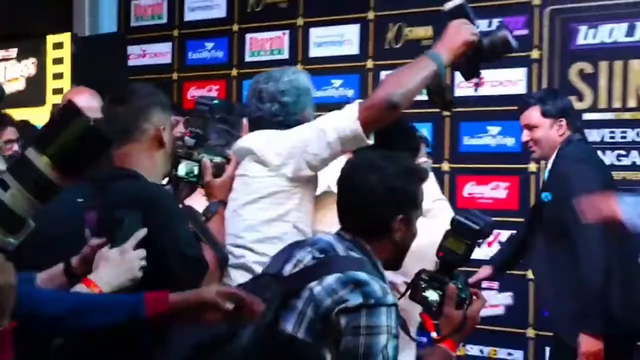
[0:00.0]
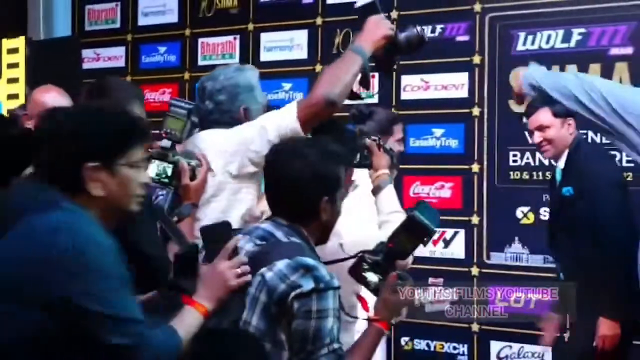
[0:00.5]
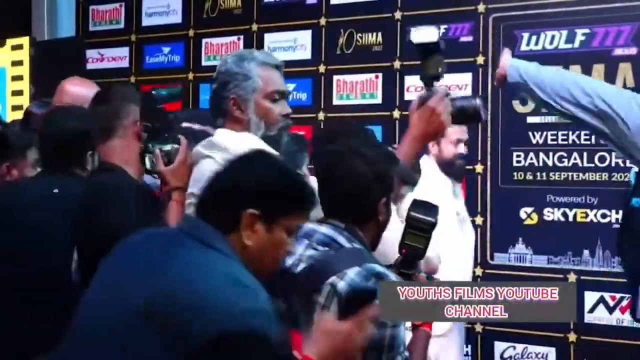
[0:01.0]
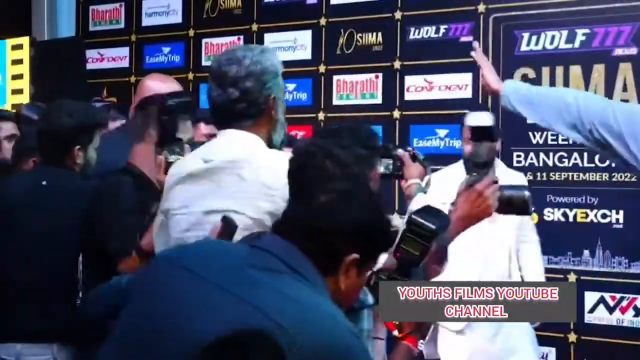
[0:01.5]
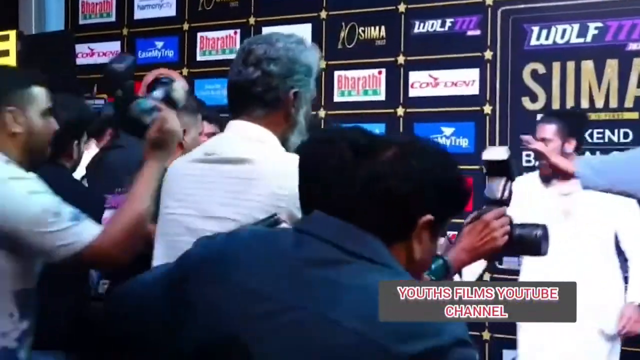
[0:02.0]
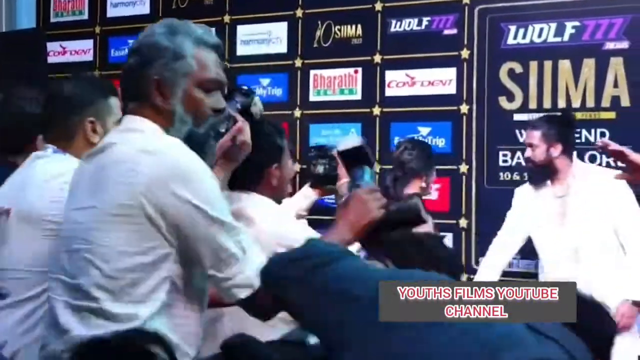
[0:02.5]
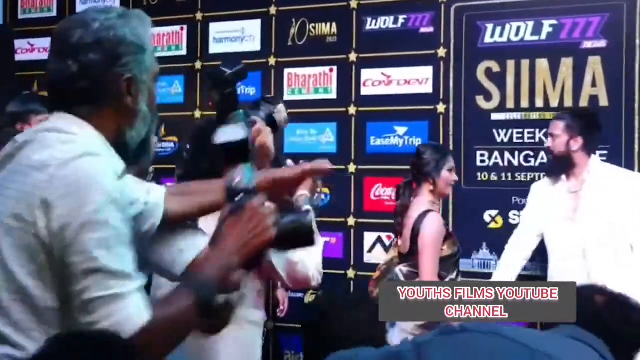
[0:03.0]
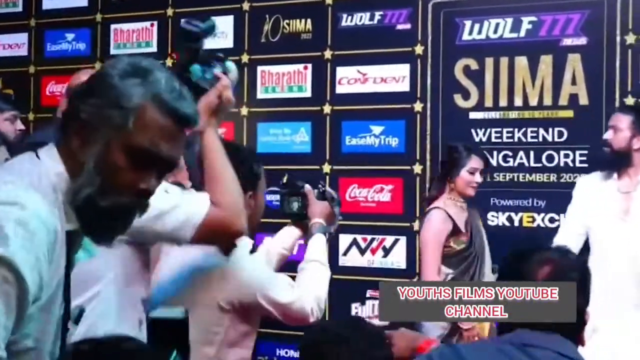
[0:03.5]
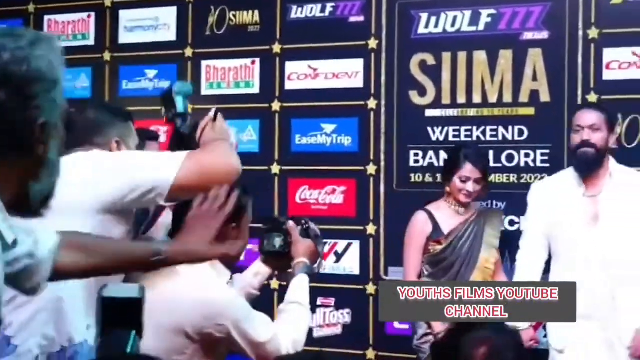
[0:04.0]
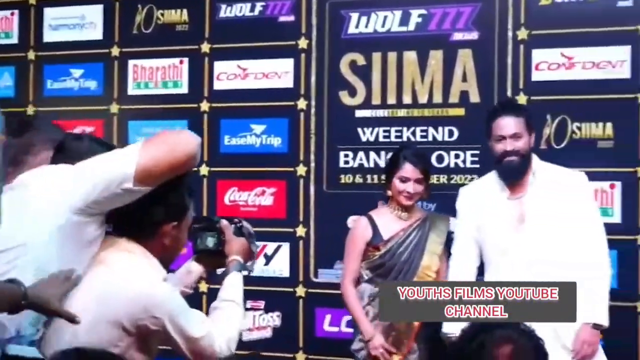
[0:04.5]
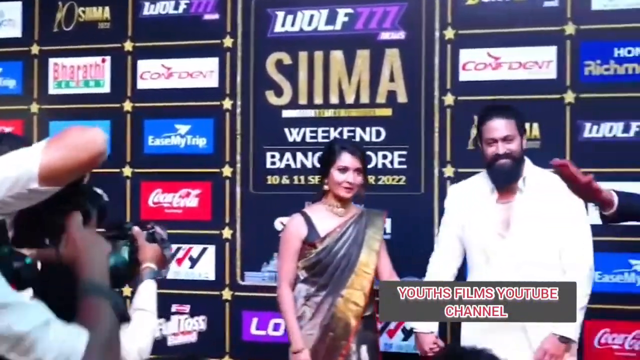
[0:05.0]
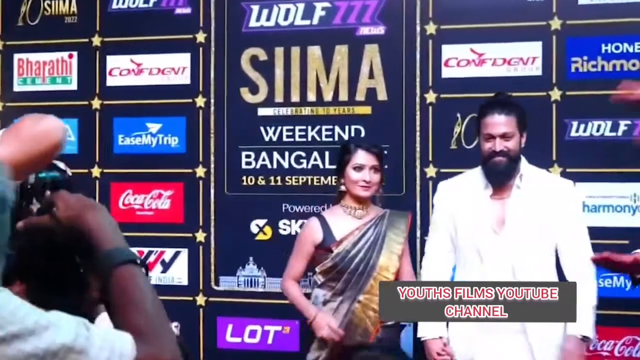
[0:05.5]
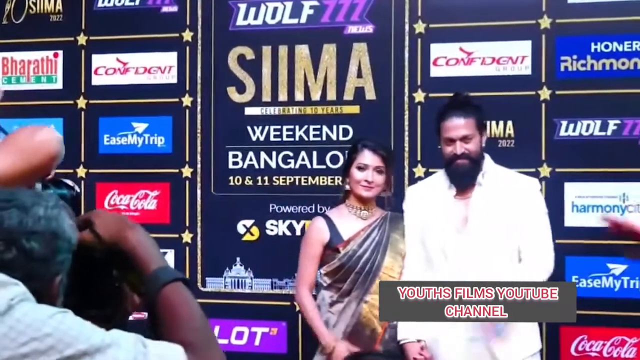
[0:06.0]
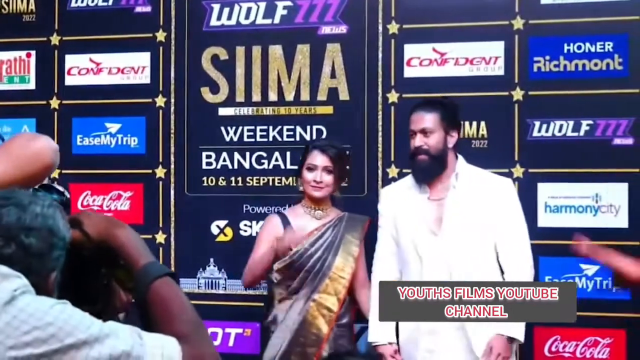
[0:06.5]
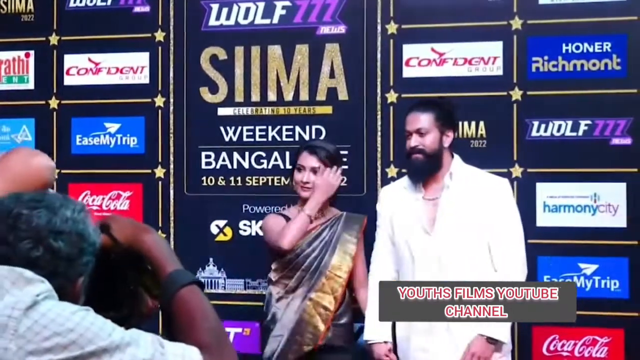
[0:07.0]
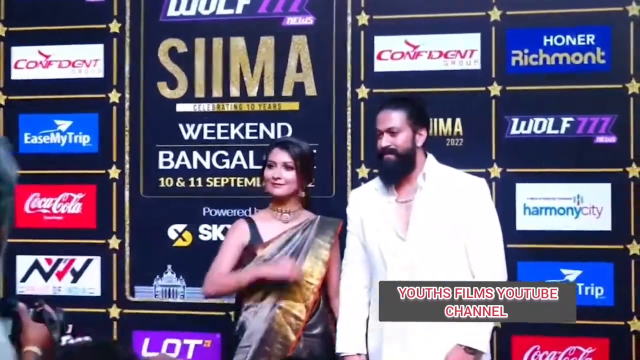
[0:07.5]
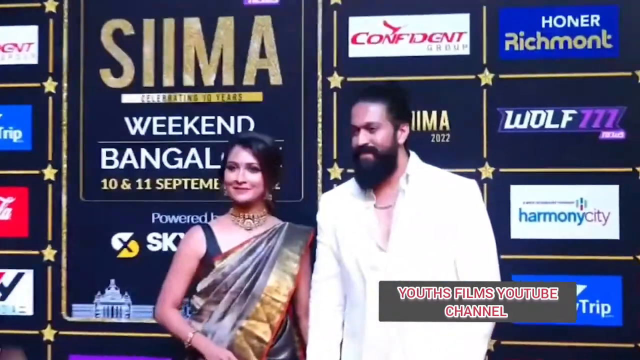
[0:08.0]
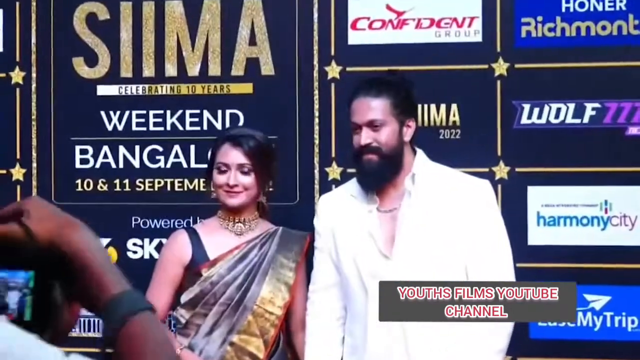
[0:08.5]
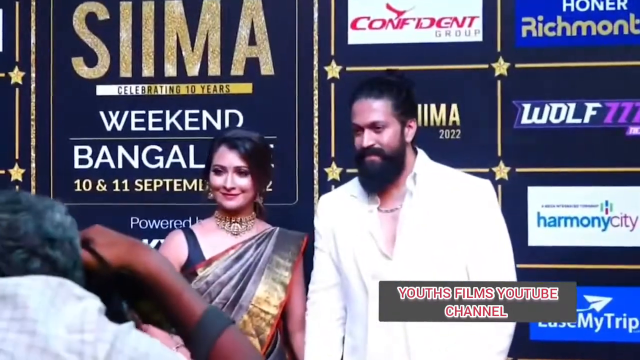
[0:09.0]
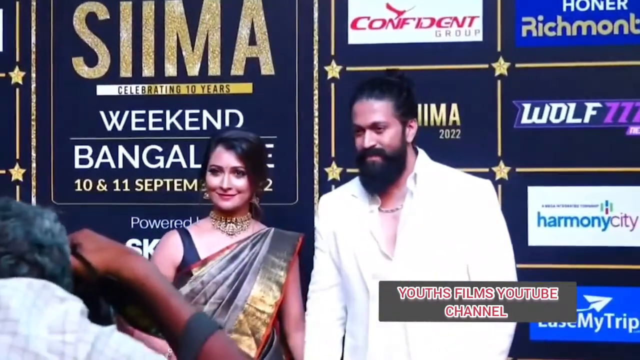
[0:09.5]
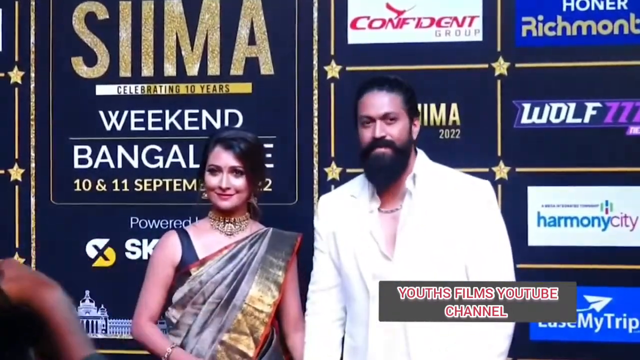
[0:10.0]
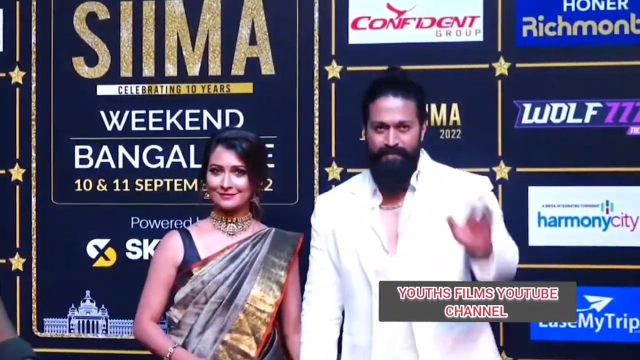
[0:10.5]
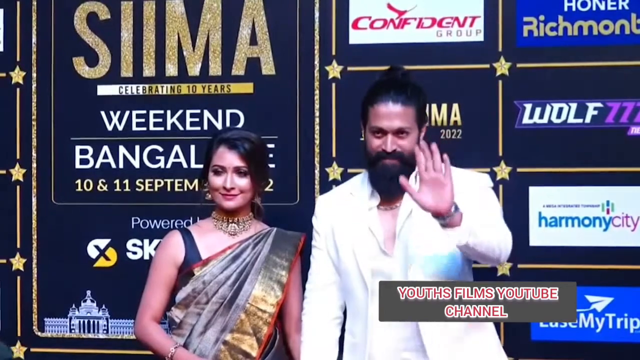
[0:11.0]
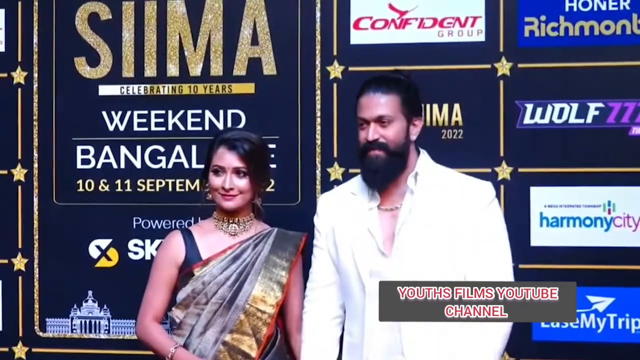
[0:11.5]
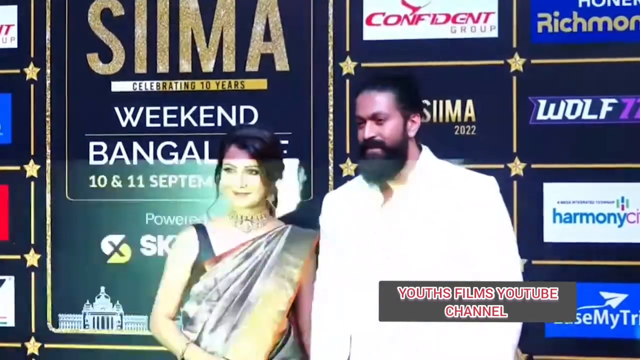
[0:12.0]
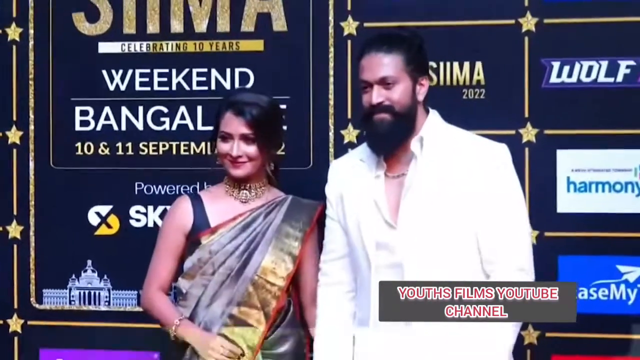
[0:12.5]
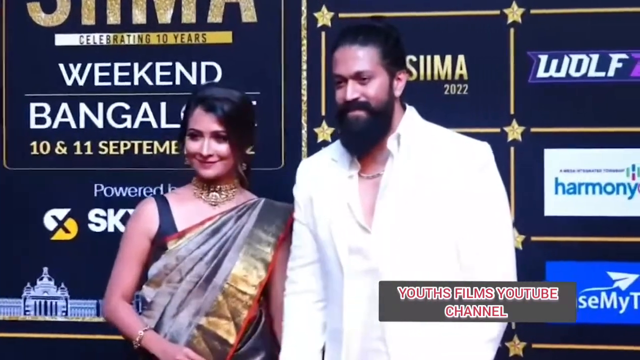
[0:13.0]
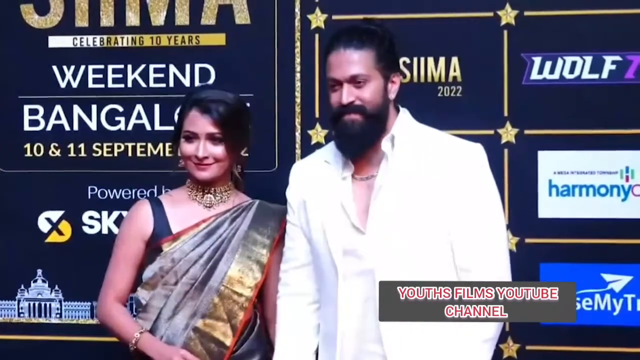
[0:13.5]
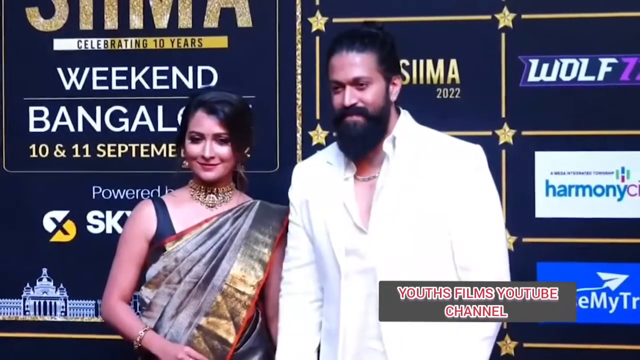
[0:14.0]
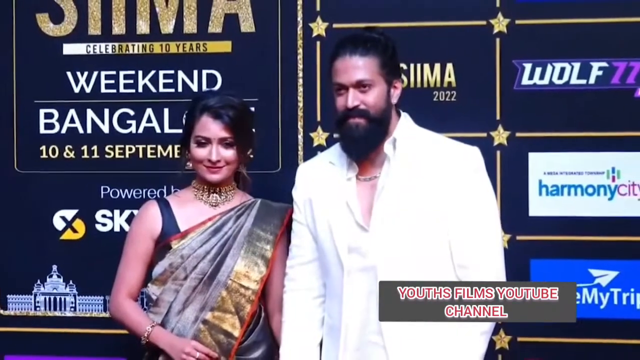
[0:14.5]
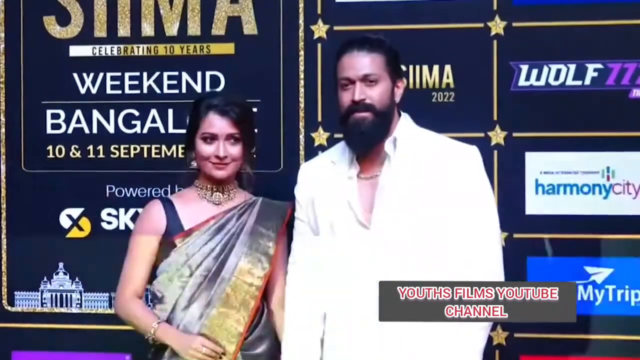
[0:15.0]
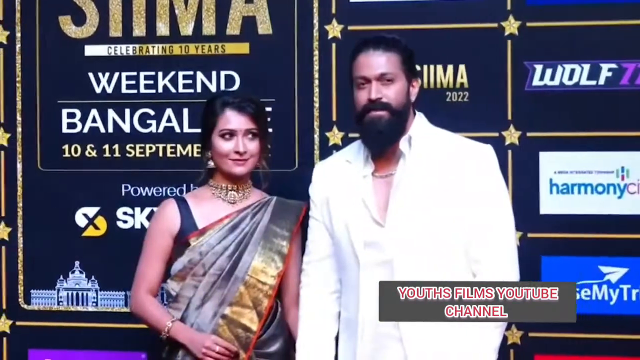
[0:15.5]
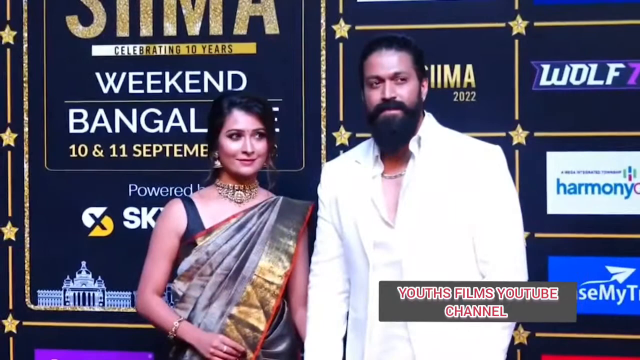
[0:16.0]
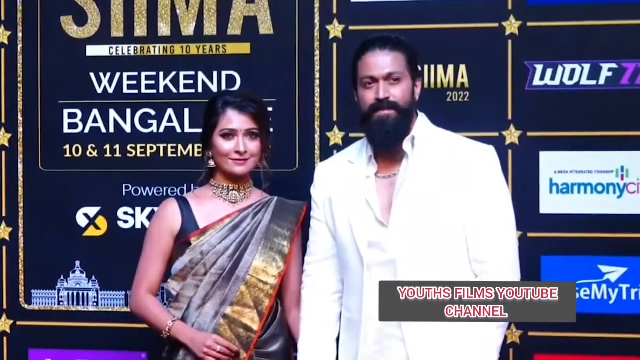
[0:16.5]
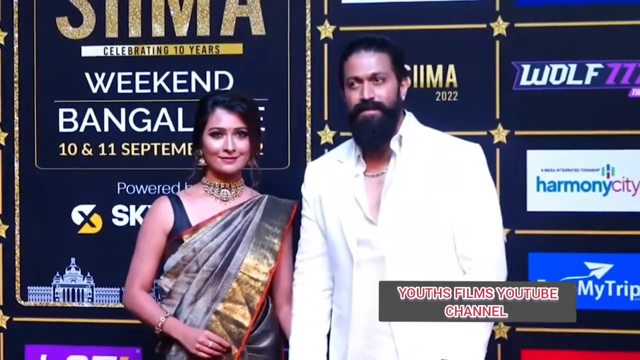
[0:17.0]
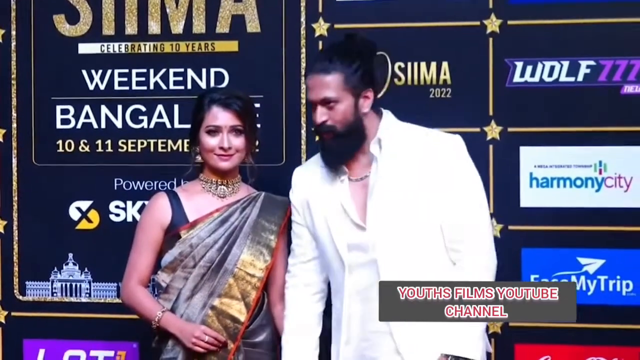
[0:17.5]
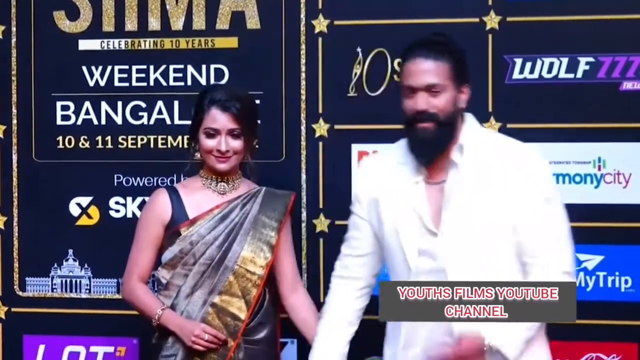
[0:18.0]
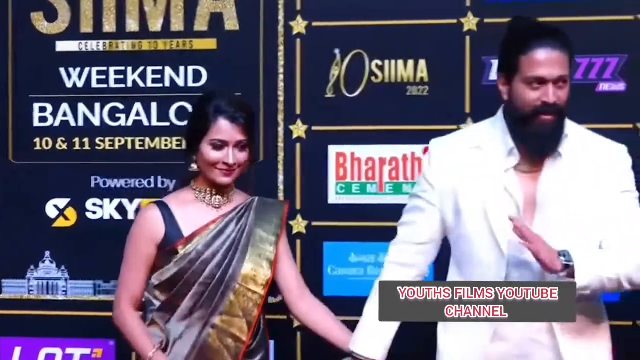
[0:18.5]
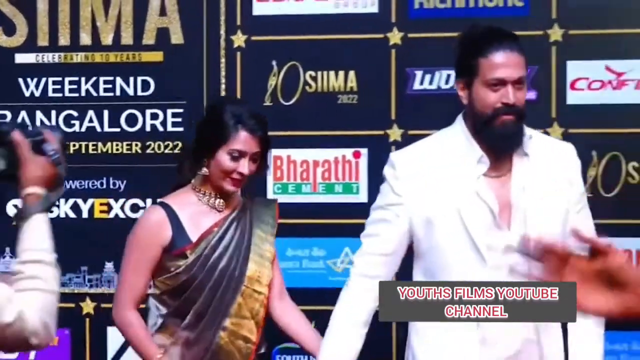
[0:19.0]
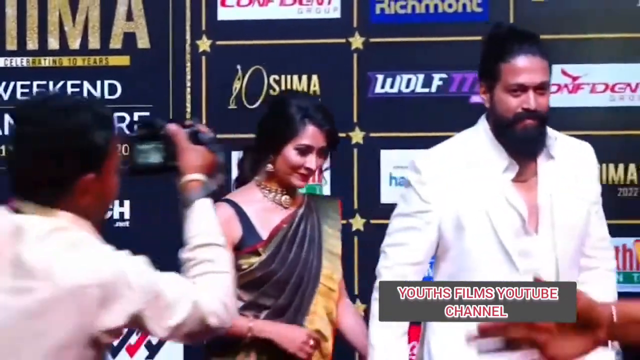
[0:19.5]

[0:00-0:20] The scene appears to be some kind of promotional event, apparently in Bangalore judging by the signage behind the people. A couple walks into frame: a man in a white suit and a woman in a gold and brown sari. There is a lot of press and cameras, with photographers swarming around to take photos of the couple. Once they get in front of the signage, which is covered in logos and promotional images, they wave to the cameras as lots of flashbulbs go off. They appear to be a very famous couple. The ad images behind them are arranged in a grid-like pattern; some read "Confident Group", "Wolf 777" and "Harmony City", and one begins "Honor Rich". Other text reads "SEMA, celebrating 10 years, SEMA Weekend, celebrating 10 years, Bangalore, 10 and 11 September 2022", and below that it says "powered by Skyexch".